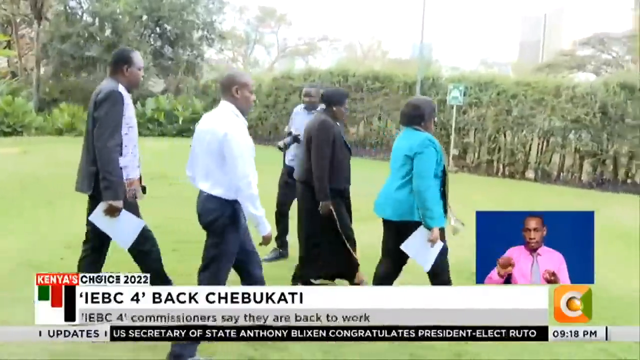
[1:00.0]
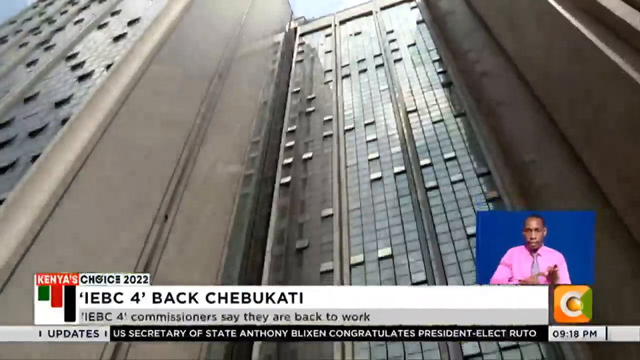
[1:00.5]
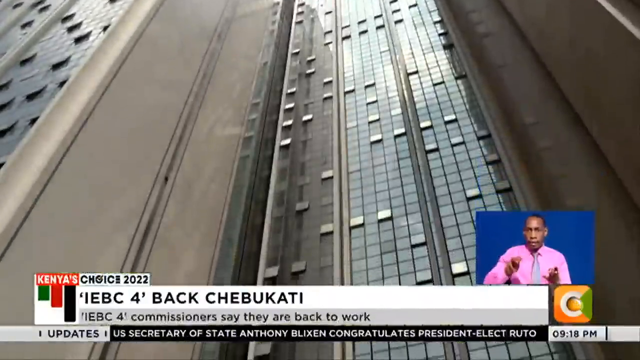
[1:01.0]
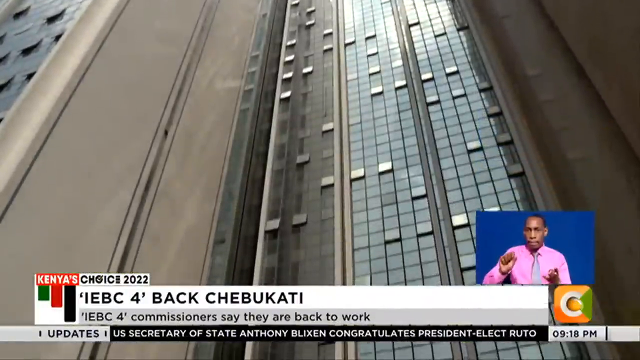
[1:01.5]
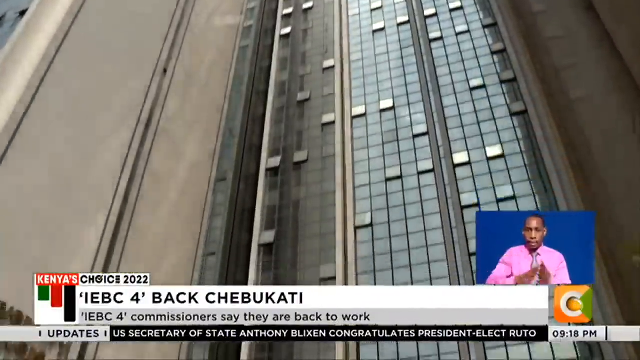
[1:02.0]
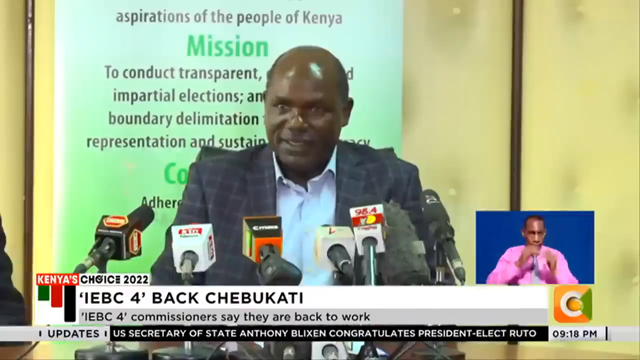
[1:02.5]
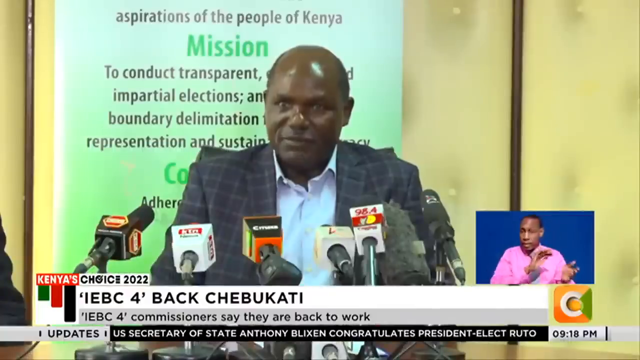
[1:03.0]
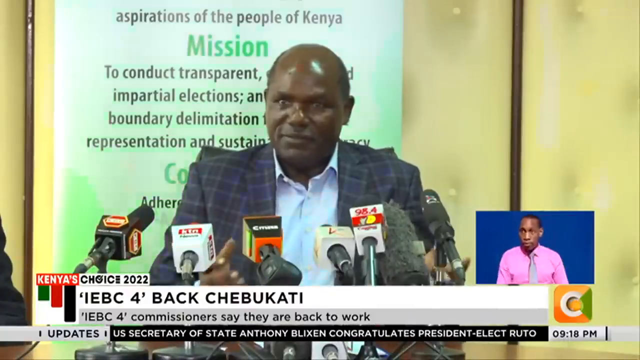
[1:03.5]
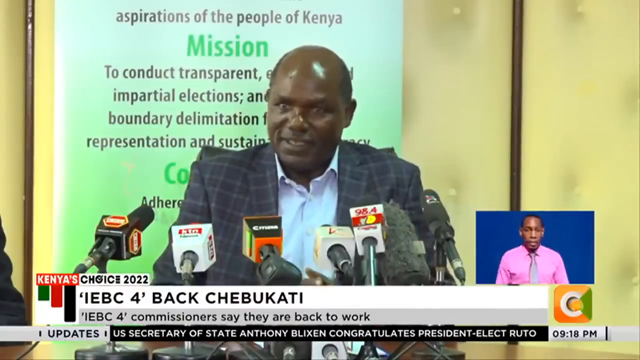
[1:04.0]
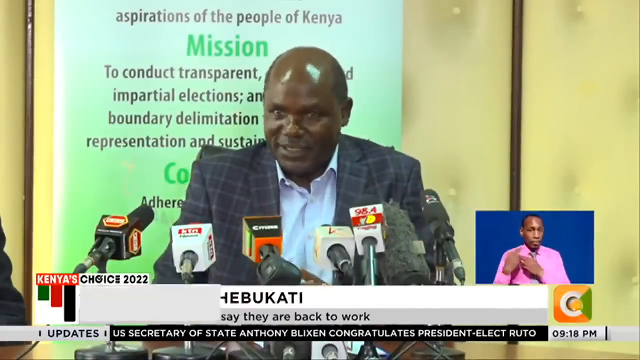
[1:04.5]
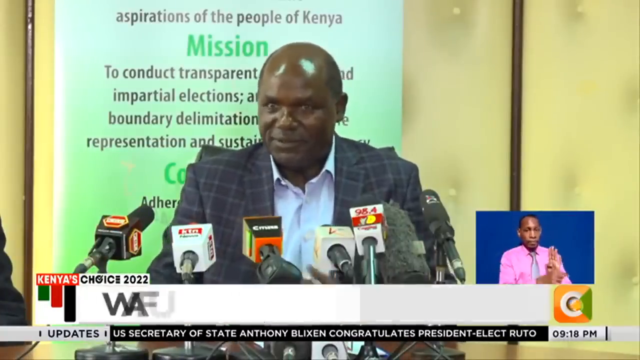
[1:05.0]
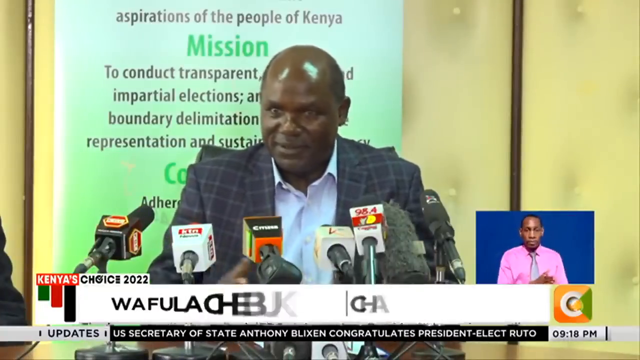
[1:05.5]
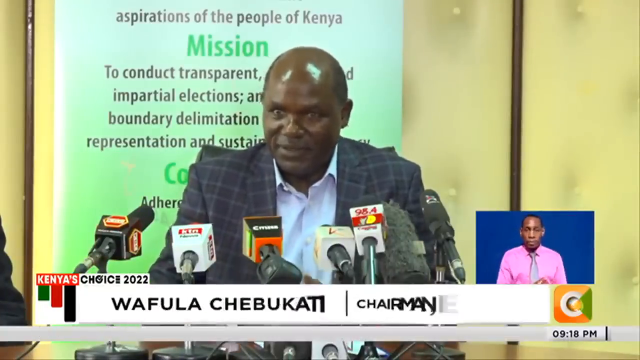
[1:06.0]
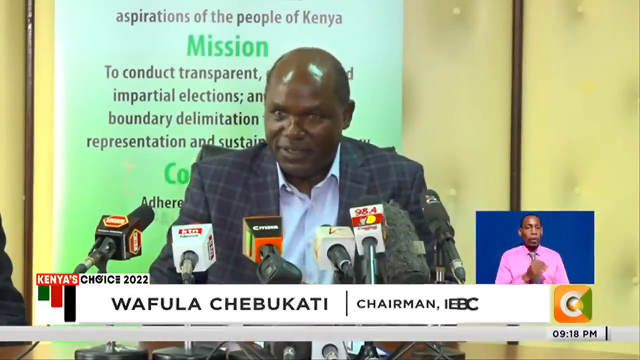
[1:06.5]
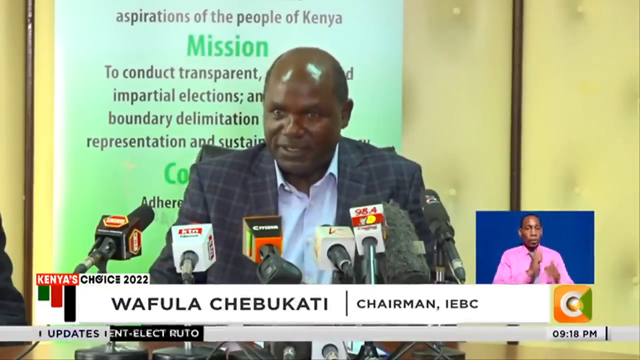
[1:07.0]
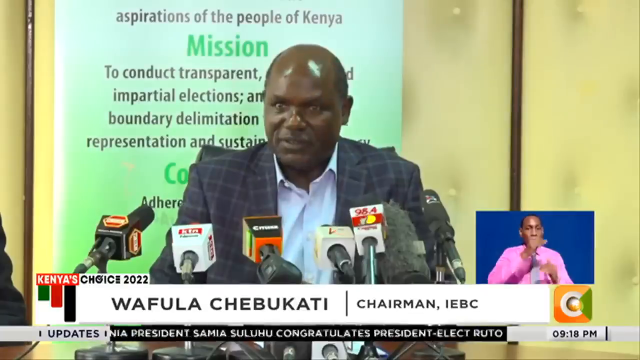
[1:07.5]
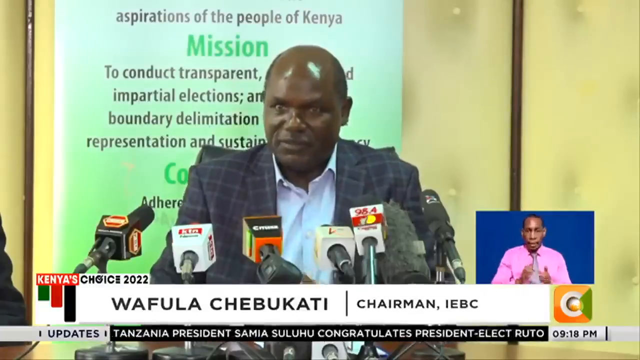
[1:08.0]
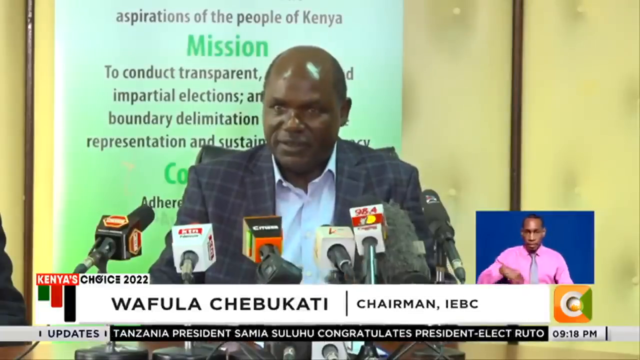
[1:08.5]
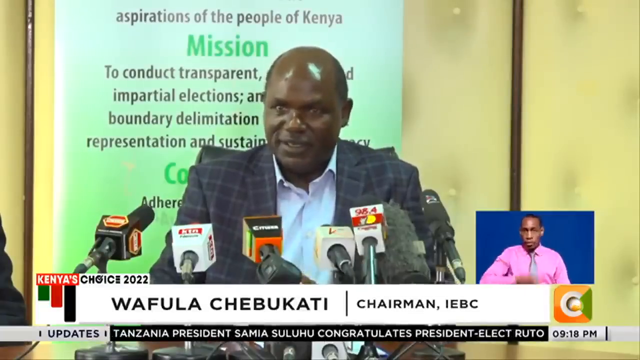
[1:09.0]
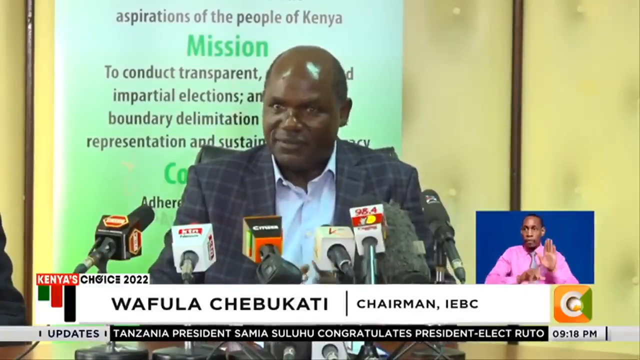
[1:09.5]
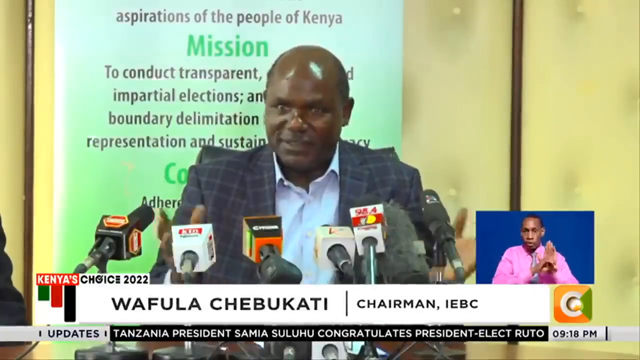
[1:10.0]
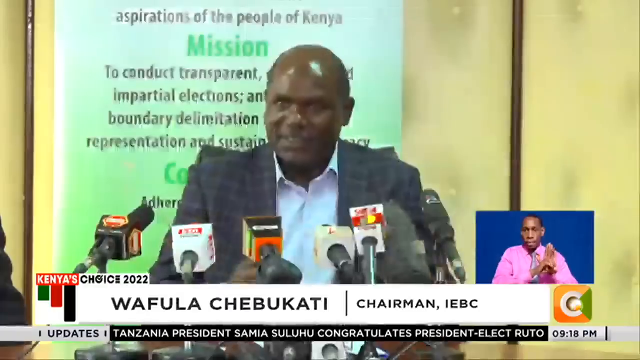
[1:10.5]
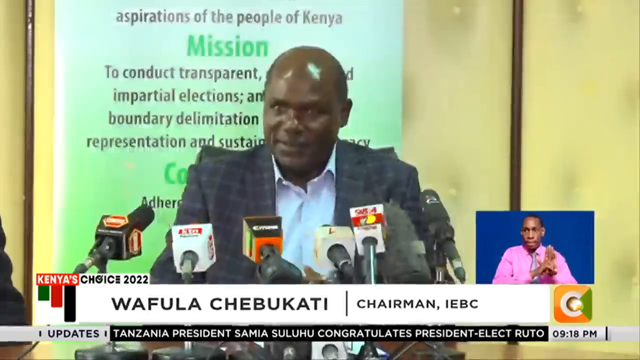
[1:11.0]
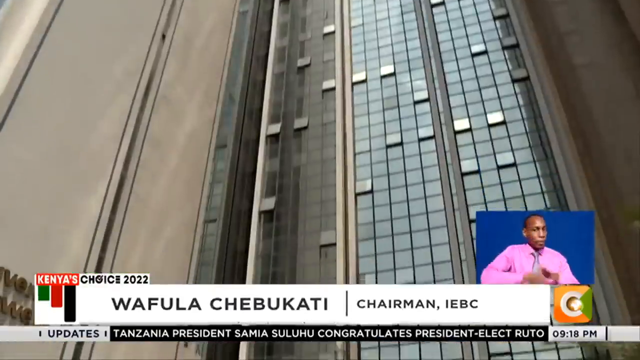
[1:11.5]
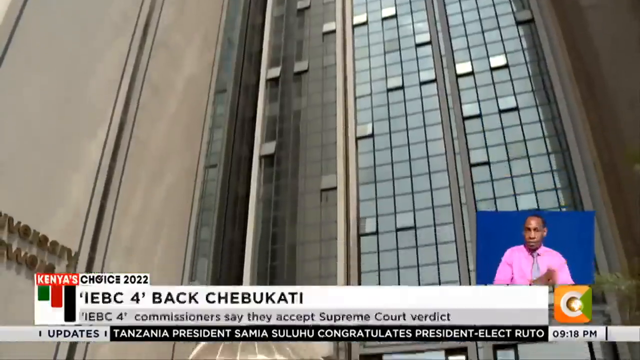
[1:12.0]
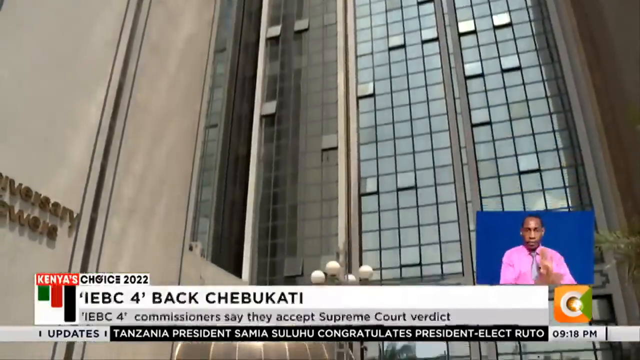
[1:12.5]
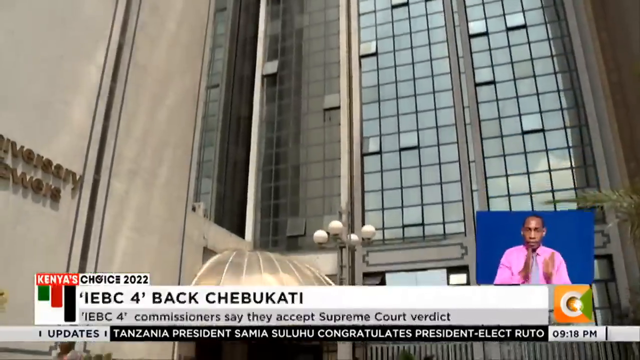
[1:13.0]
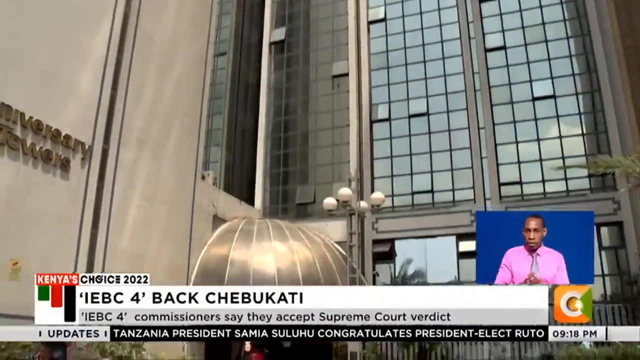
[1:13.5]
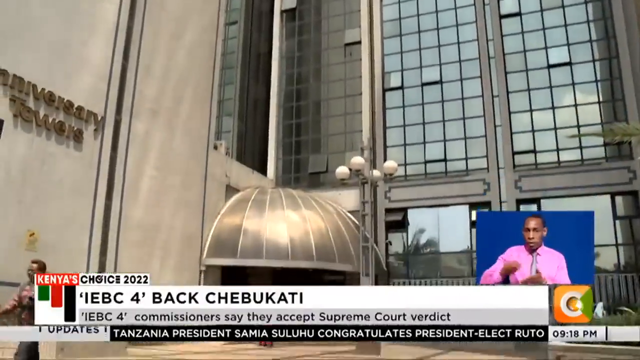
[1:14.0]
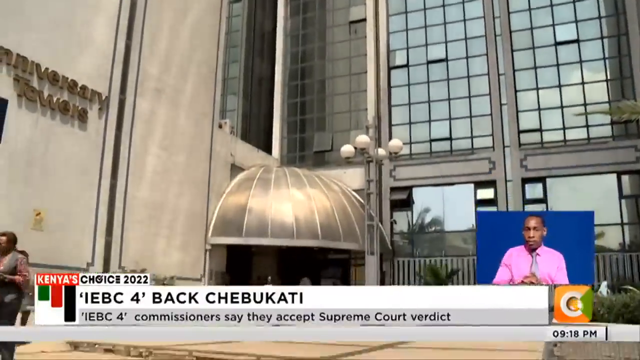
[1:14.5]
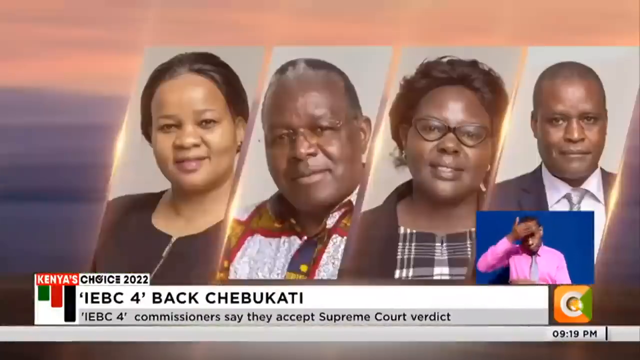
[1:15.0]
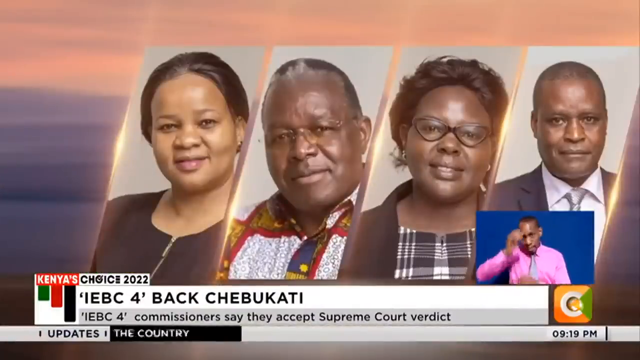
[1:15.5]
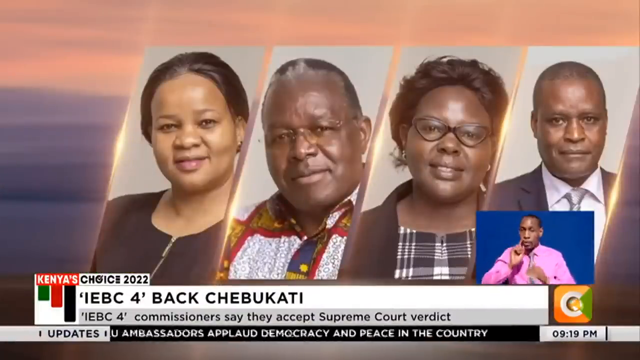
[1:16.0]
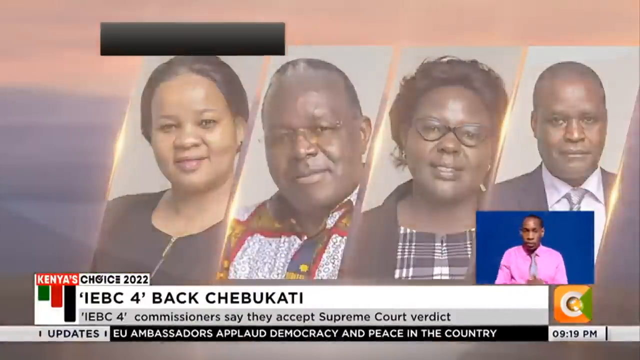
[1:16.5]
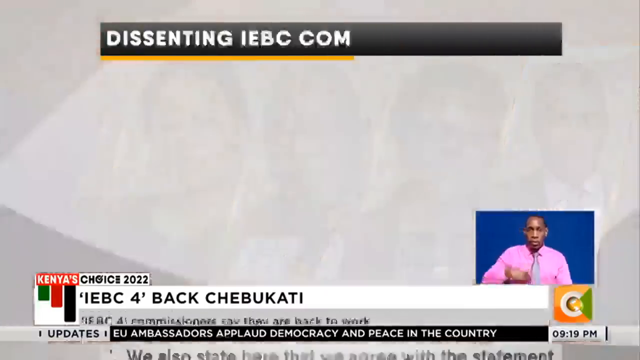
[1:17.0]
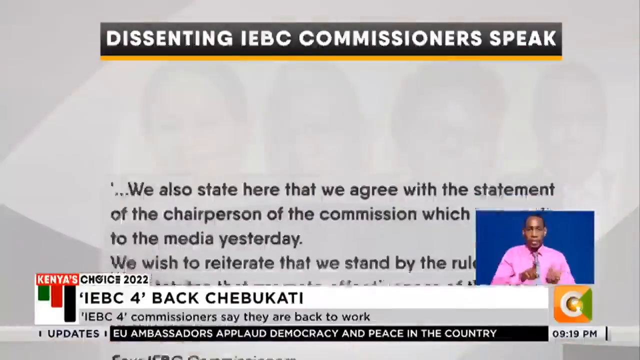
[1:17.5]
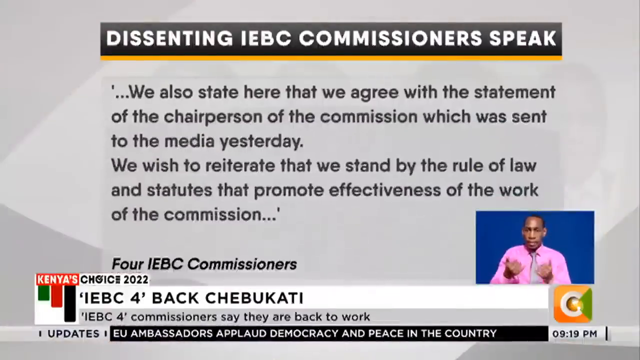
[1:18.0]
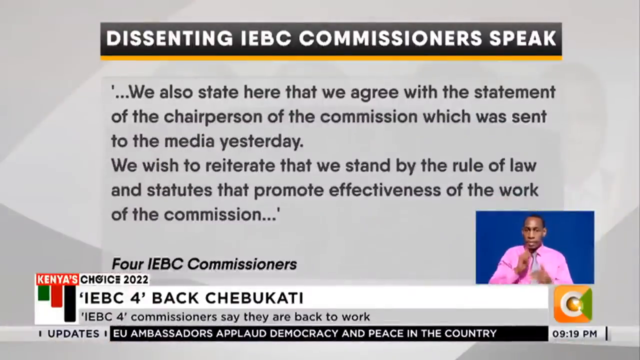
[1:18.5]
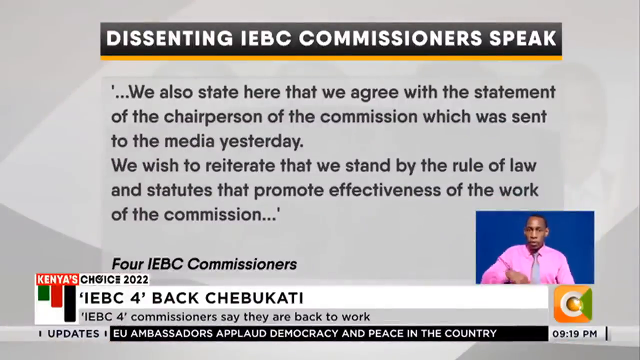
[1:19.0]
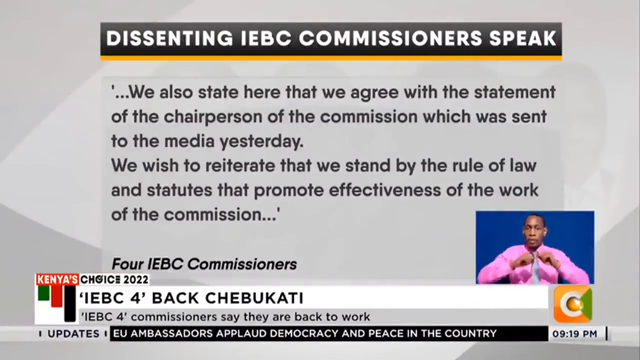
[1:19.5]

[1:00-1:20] More footage shows a man who appears to be the chairman of the IEBC, possibly the man in the white shirt seen earlier, speaking. The text gives his name as "Wafula Chebukadi." A bunch of microphones from different news stations are right below him, and a giant green poster behind him appears to describe the organization's mission, with text mentioning something about "to conduct transparent, impartial elections." Afterwards, footage shows a big, tall building, and the view scrolls down to the building's entrance, which has a sort of golden awning right above it; this might be the IEBC building.